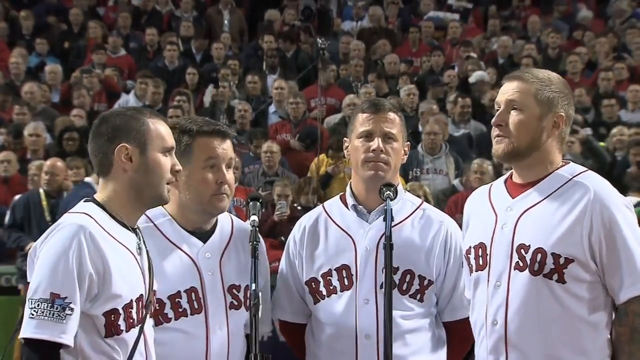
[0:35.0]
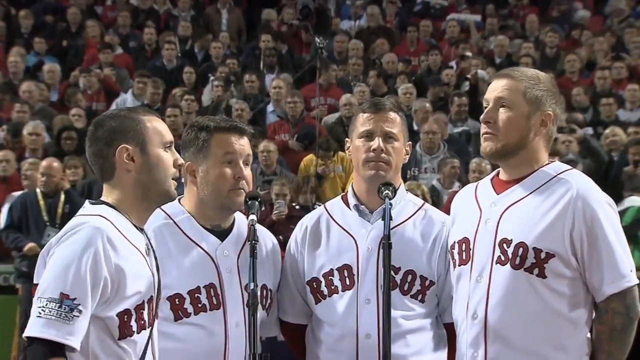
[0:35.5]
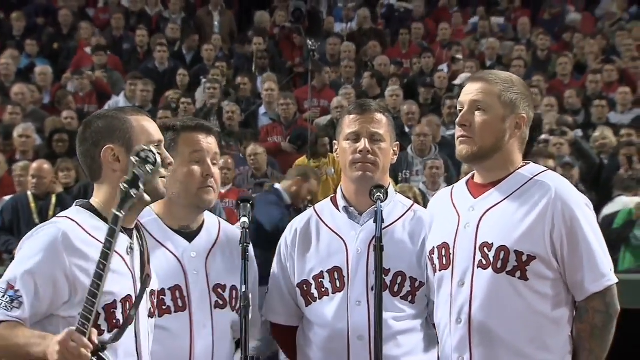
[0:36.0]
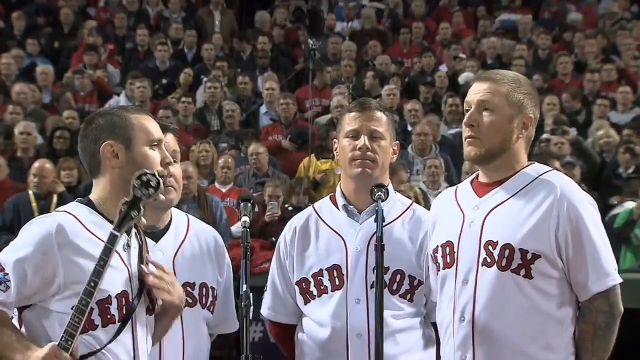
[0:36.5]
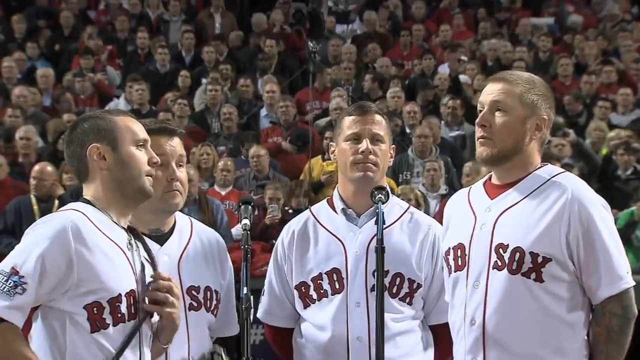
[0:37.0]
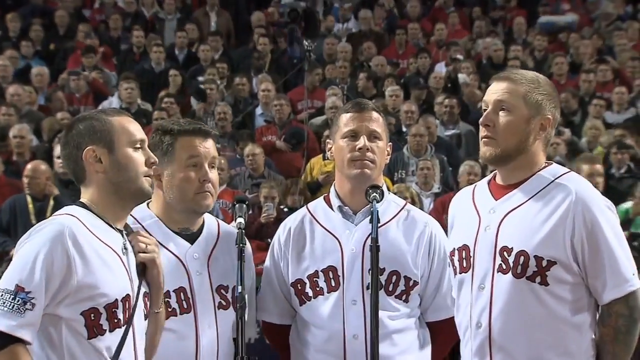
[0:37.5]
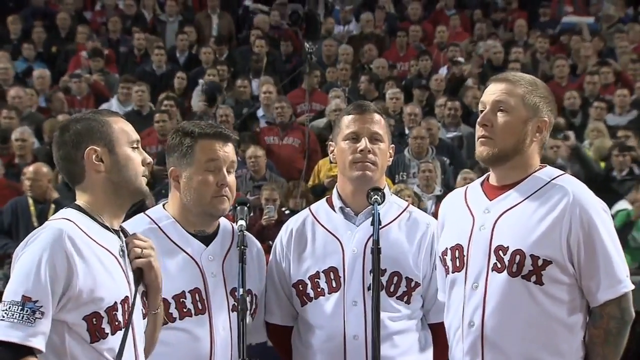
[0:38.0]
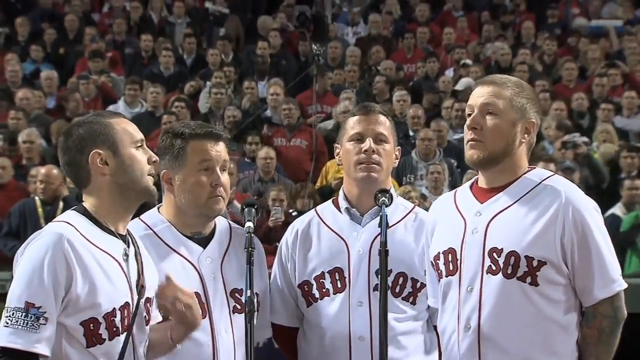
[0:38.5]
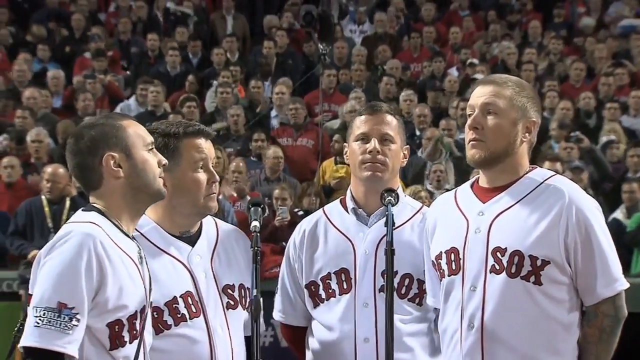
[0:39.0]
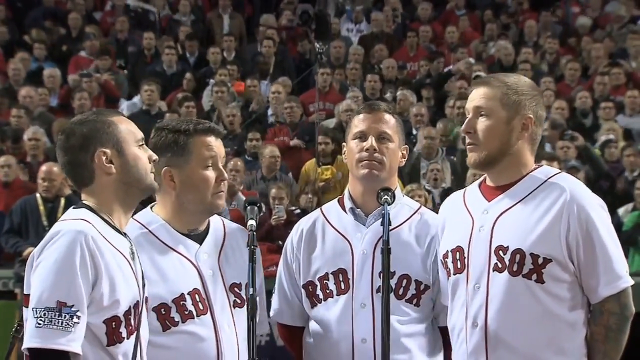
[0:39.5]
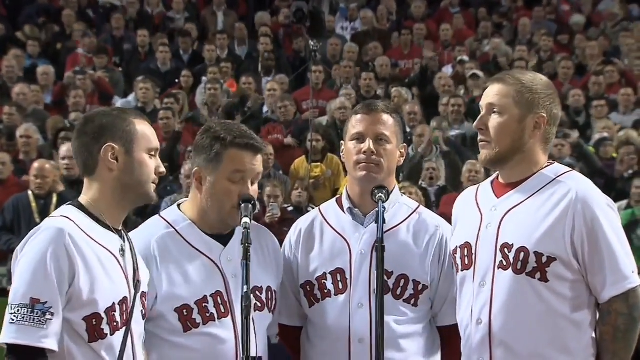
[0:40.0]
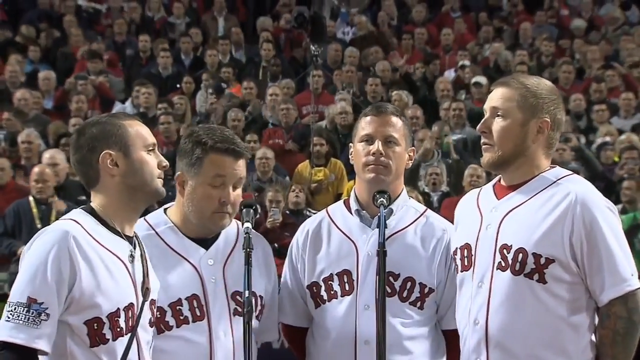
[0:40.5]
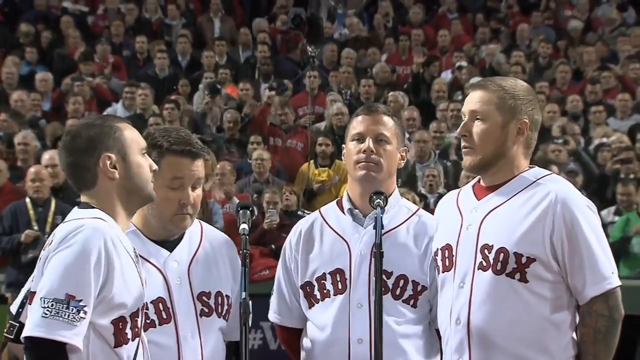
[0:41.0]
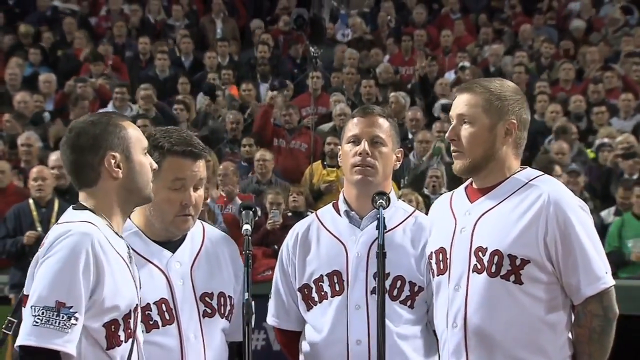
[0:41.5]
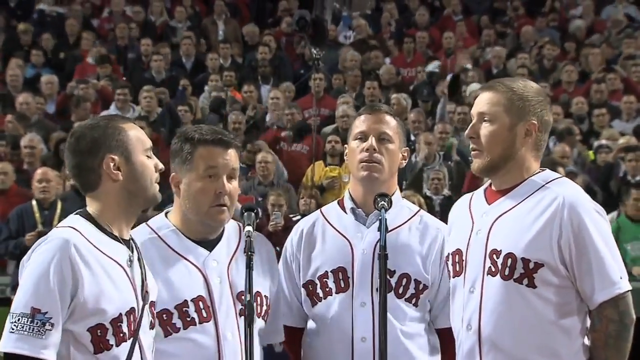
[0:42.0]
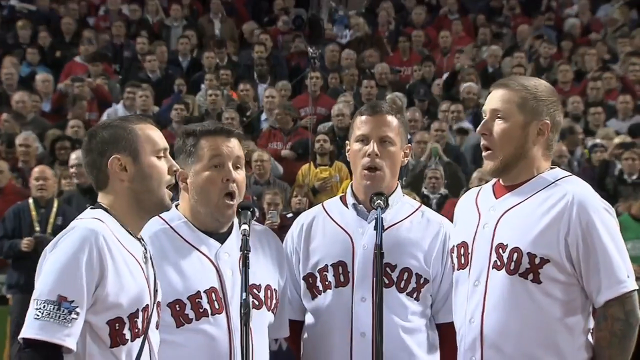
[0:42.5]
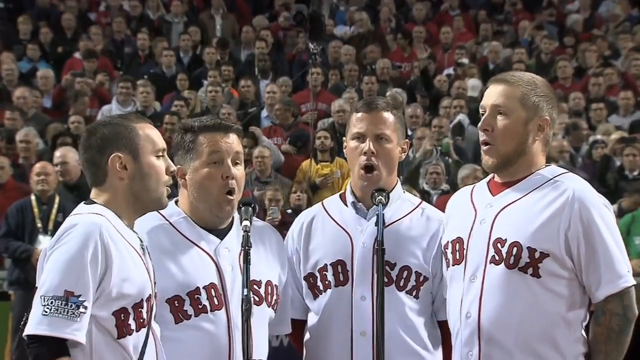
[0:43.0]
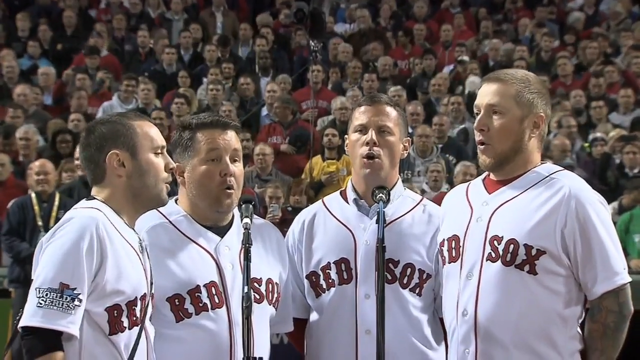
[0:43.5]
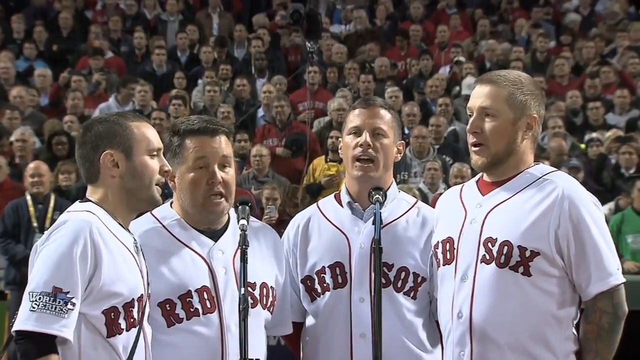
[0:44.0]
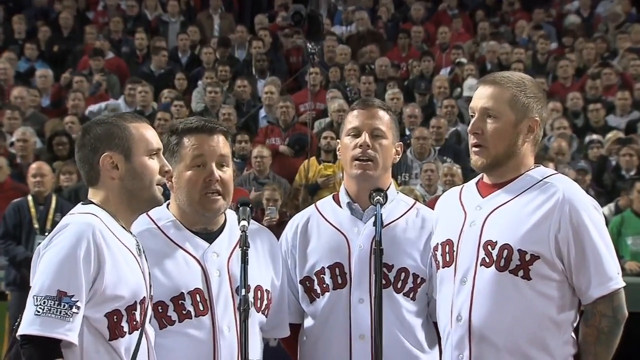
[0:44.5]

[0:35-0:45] The four men in white jerseys with "Red Sox" in red wait for their cue, count off, and begin singing. One of them holds what seems to be a banjo rather than a guitar, though only the top part of it is visible. From their mouthing, the only discernible words are "oh say can," the very start of the national anthem. In the background, the crowd, which looks like mostly white people, waves hats and hands. The men still hold their hands behind their backs, except the one with the banjo. The camera stays on this one spot with the crowd behind them.